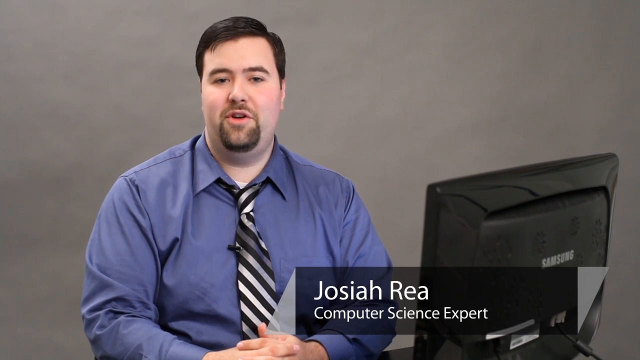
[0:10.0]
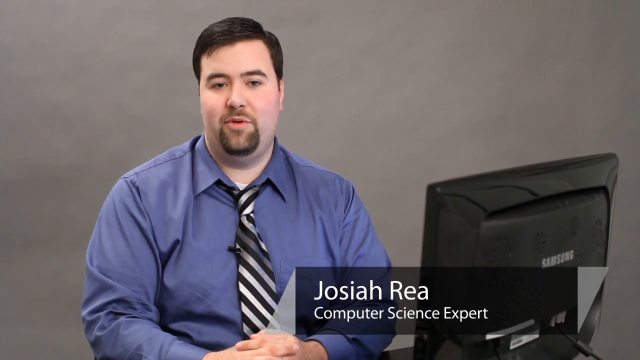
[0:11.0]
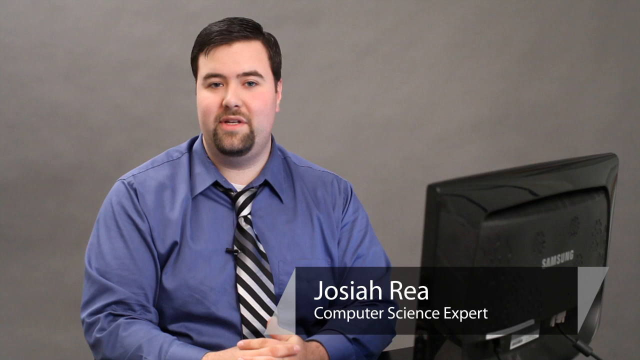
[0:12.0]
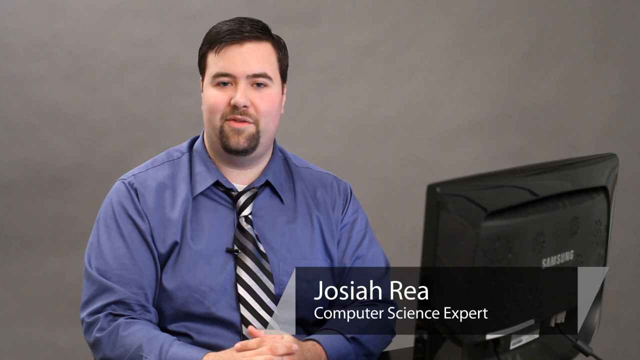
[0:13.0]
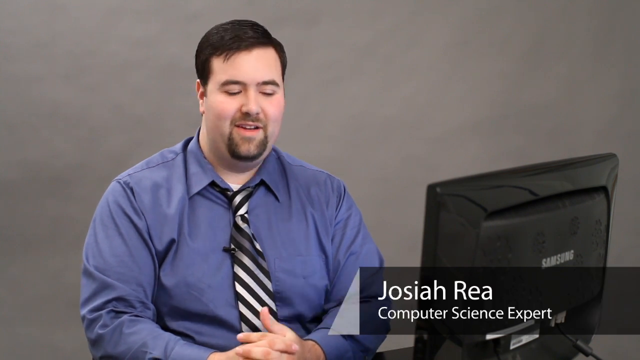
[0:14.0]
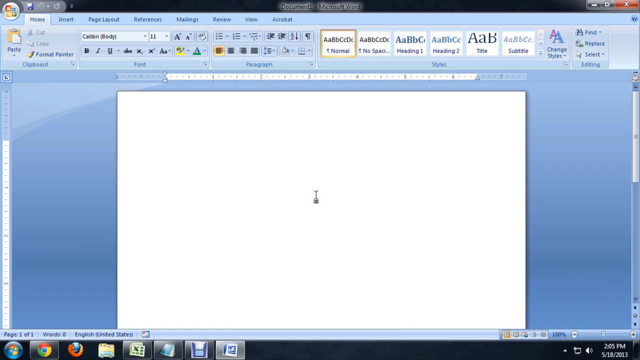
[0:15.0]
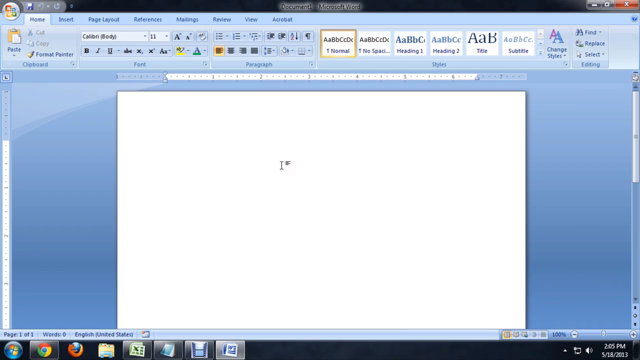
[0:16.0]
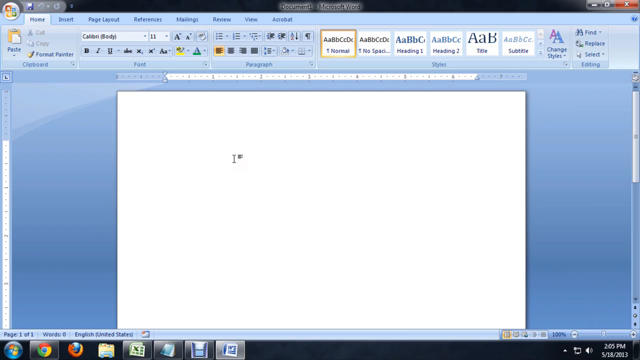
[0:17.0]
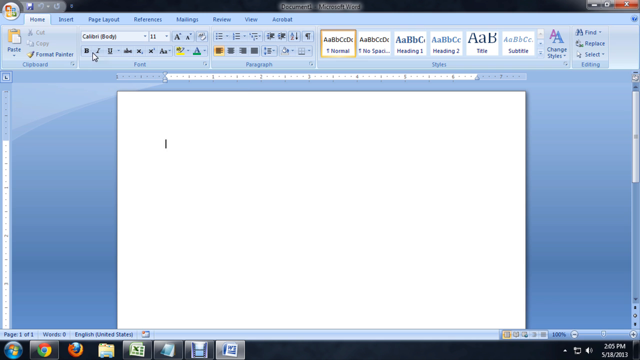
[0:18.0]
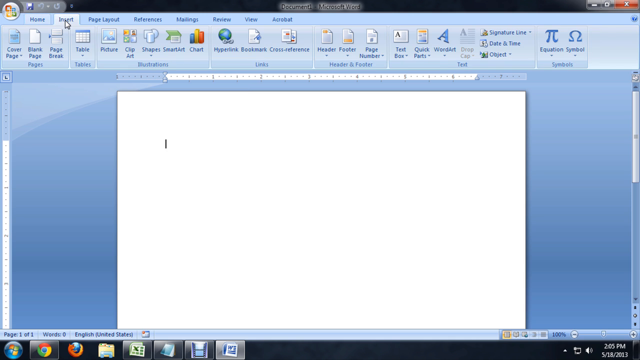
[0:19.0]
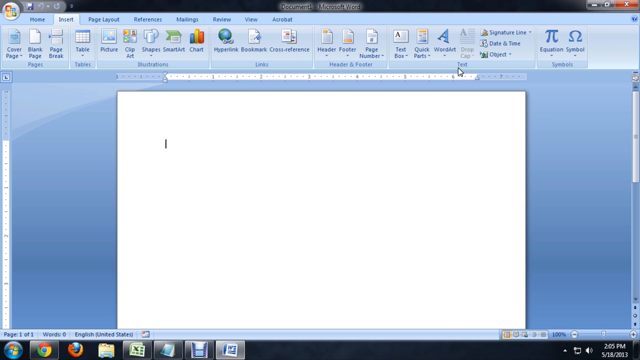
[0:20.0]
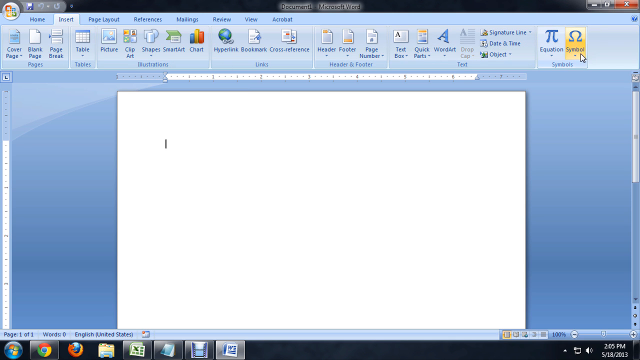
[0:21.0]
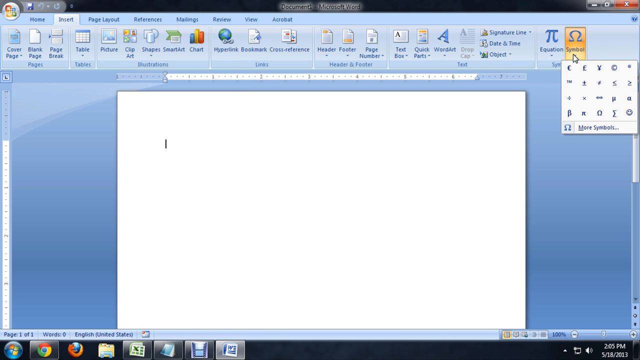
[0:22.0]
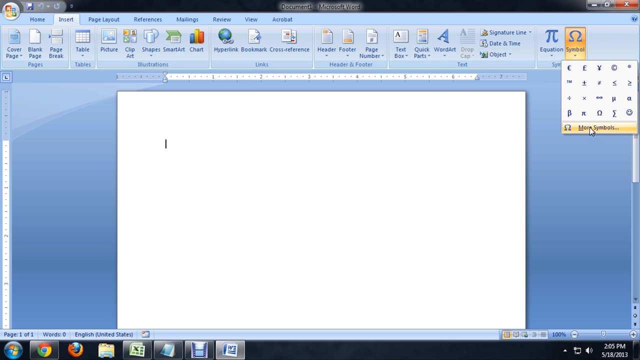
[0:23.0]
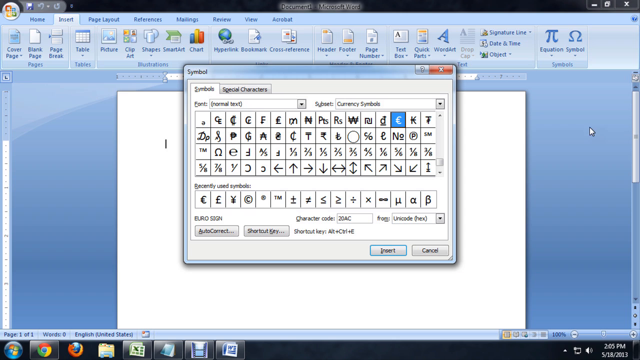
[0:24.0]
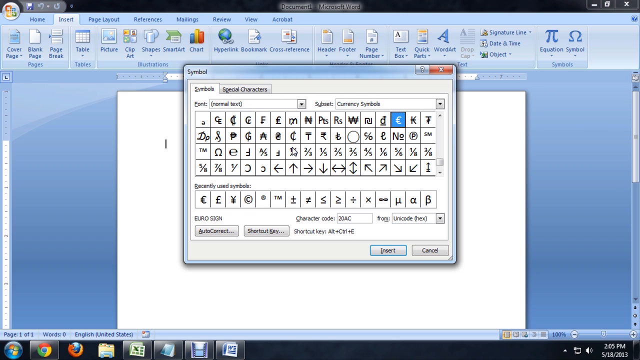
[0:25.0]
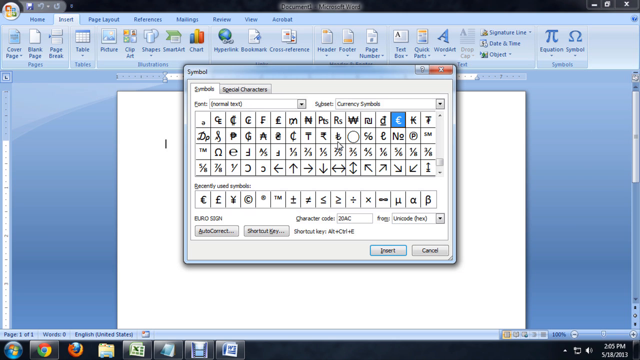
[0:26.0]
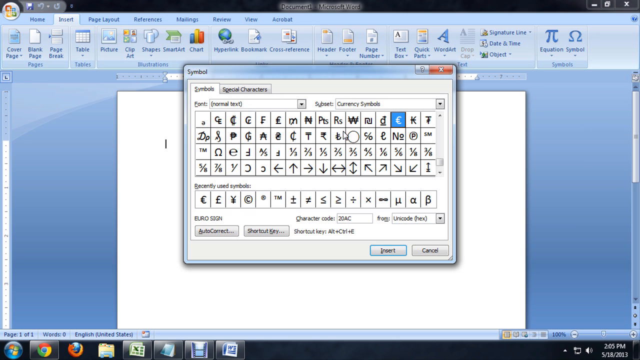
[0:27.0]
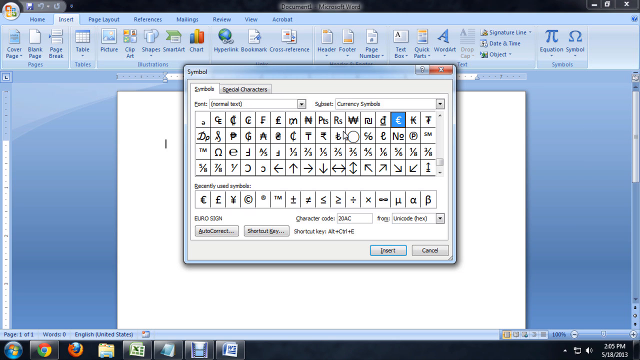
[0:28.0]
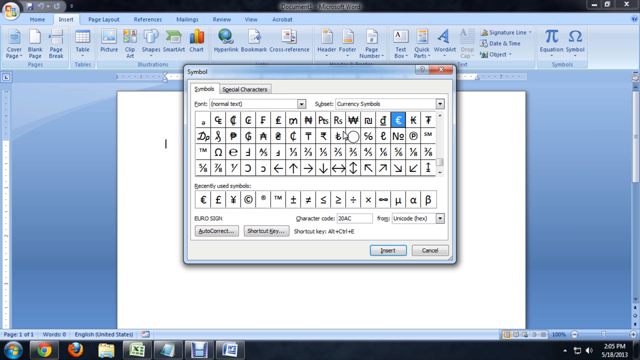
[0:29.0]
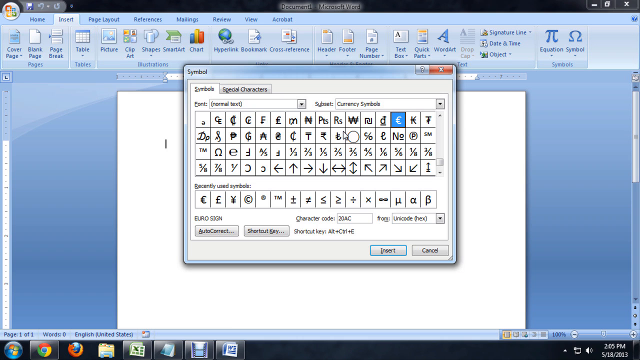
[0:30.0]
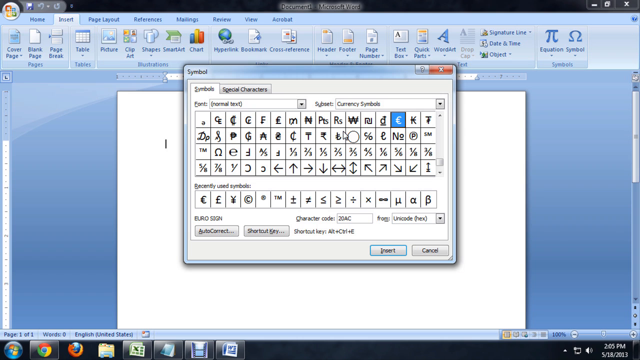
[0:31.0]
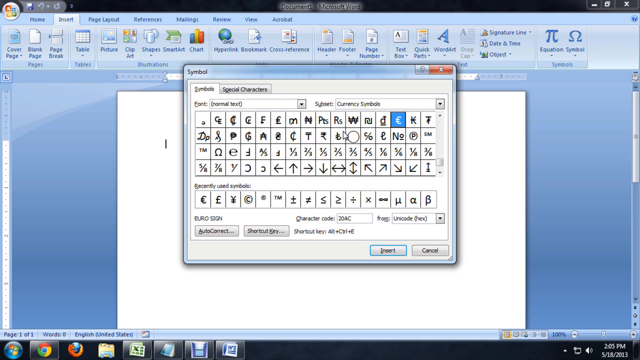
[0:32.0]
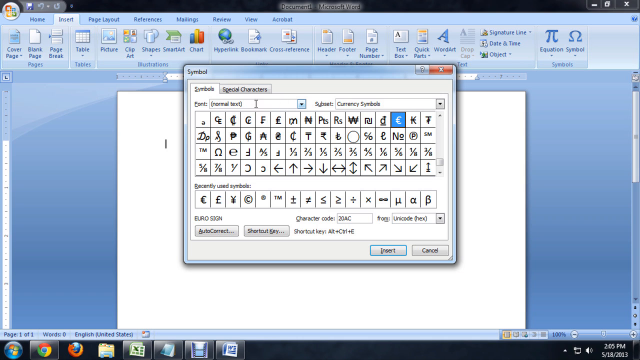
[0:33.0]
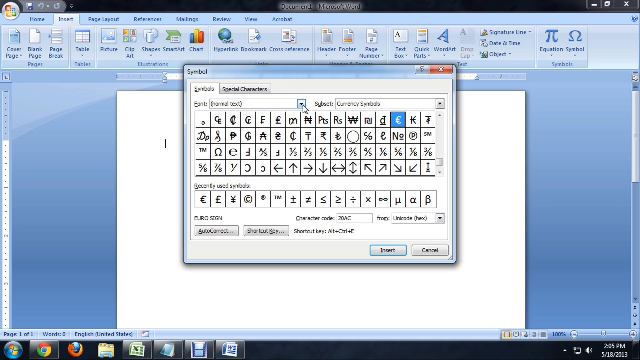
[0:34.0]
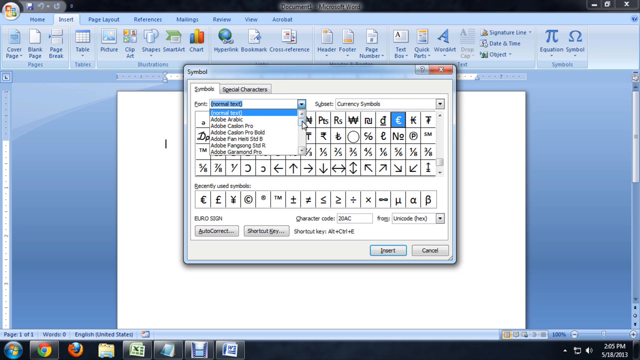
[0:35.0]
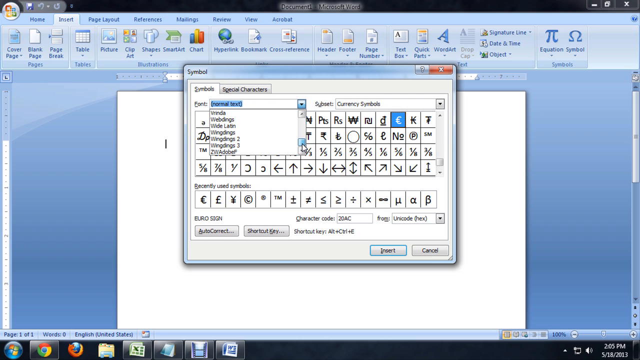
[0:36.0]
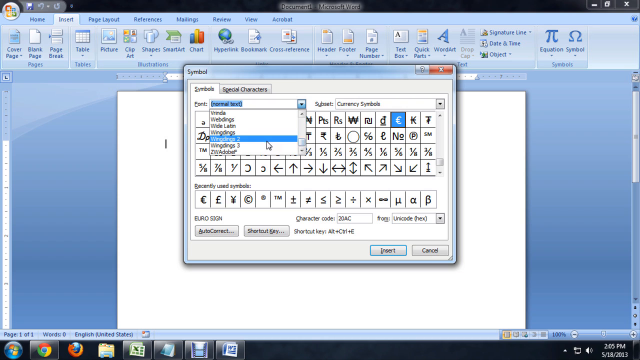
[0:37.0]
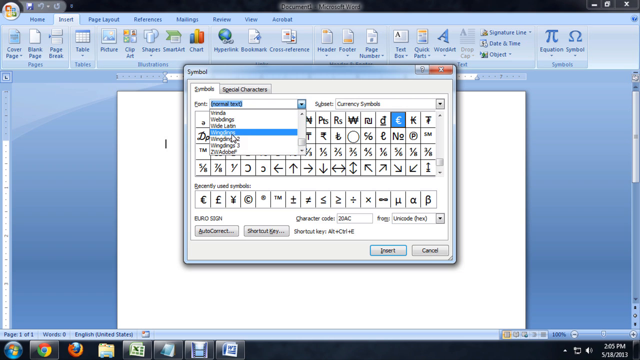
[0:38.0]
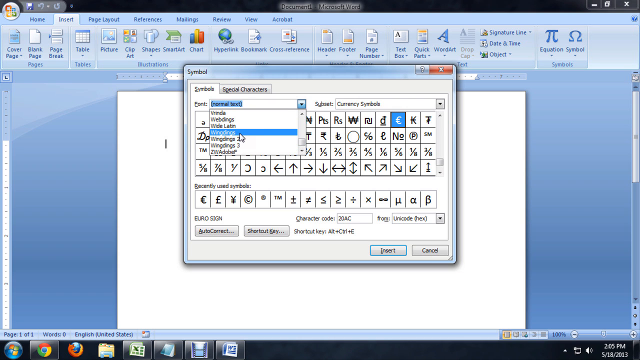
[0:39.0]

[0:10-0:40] Josiah is sitting about four to five feet away with his hands clasped together on the table, his thumbs slowly moving back and forth. He talks directly into the camera and gives a slight grin. The video then transitions to him working on what appears to be a Word document, which is blank, and his cursor moves around. He focuses on a menu option at the top right for Symbol and clicks it, opening a range of symbols, and sort of moves his mouse around over them. He then clicks the font drop-down, clicks on one of the fonts, and sort of focuses in on it for a couple of seconds.